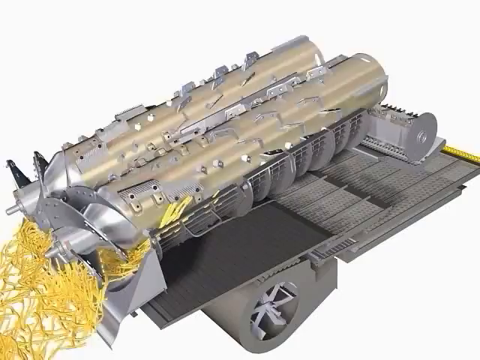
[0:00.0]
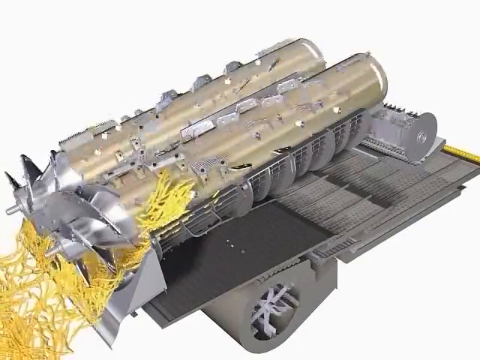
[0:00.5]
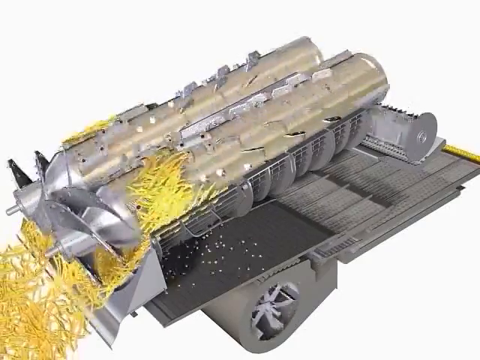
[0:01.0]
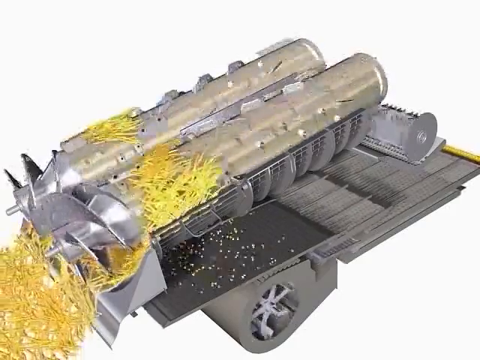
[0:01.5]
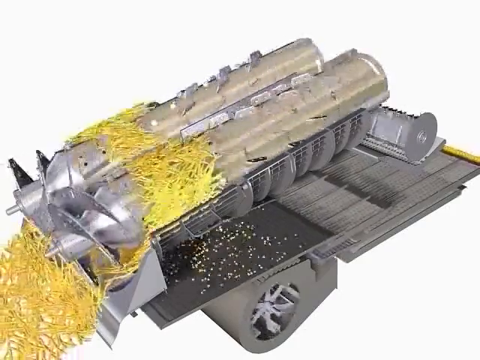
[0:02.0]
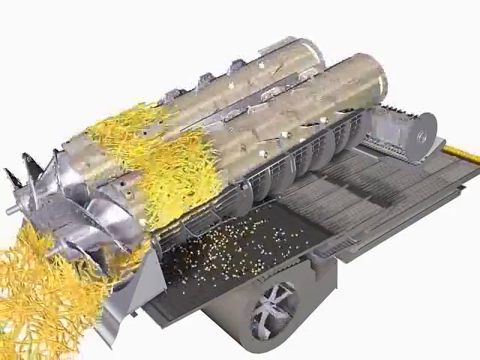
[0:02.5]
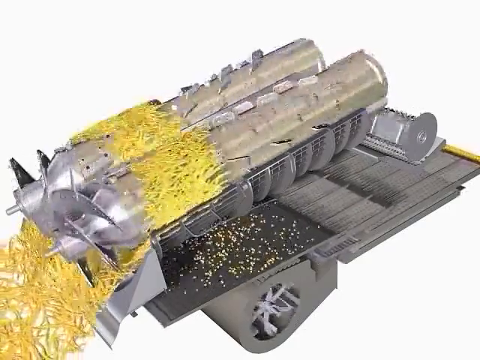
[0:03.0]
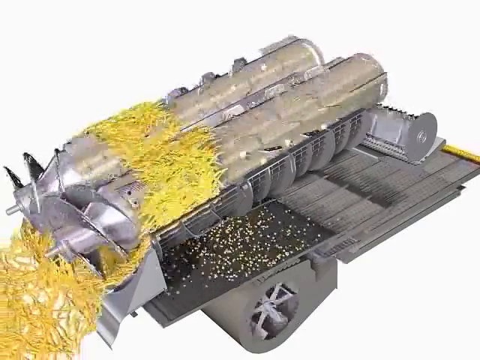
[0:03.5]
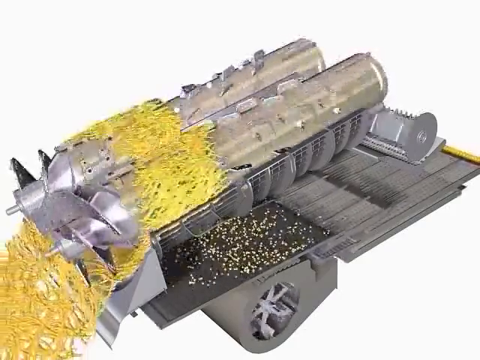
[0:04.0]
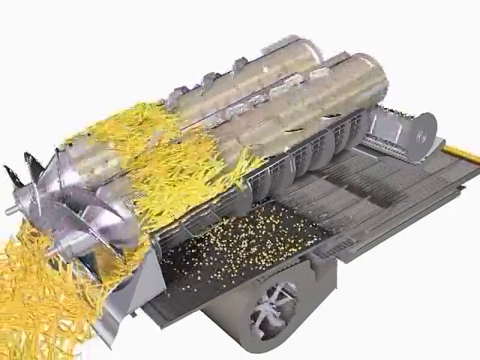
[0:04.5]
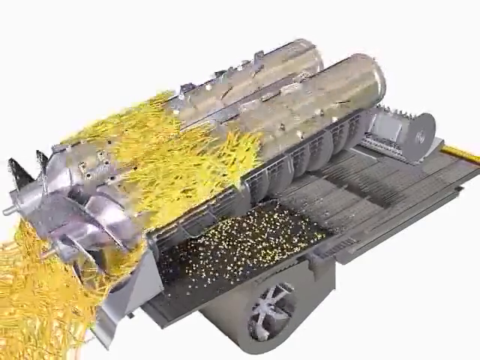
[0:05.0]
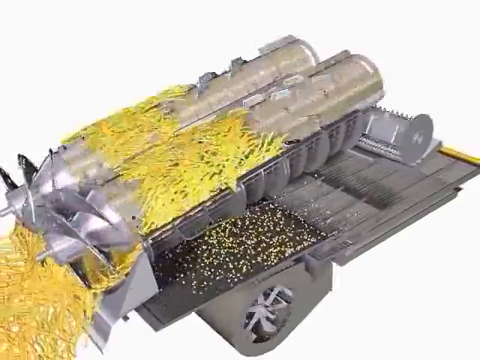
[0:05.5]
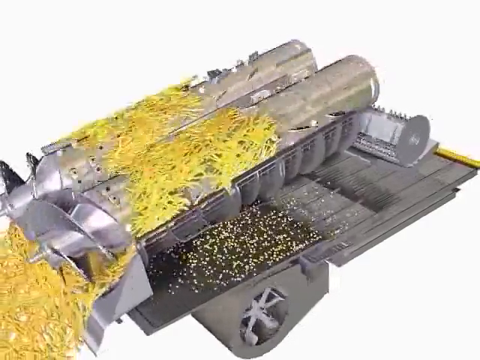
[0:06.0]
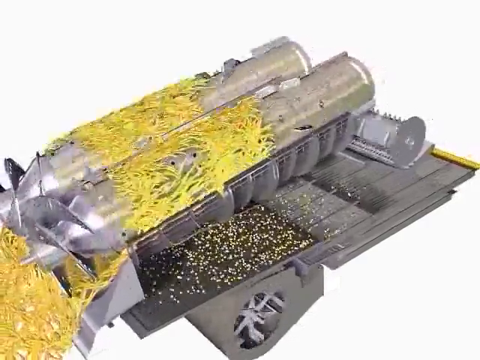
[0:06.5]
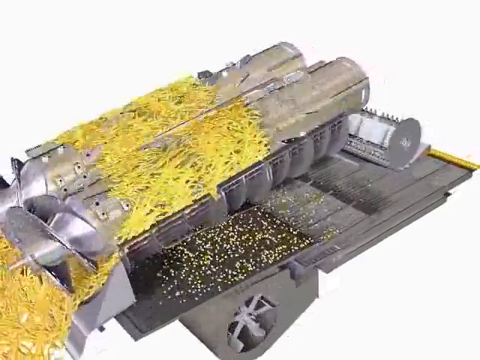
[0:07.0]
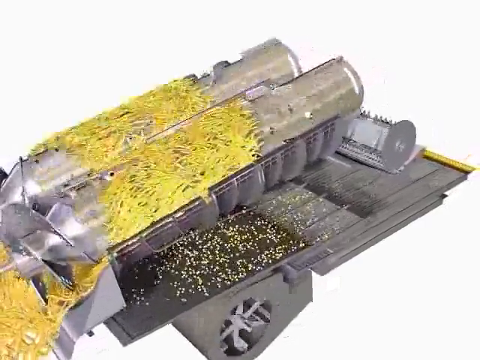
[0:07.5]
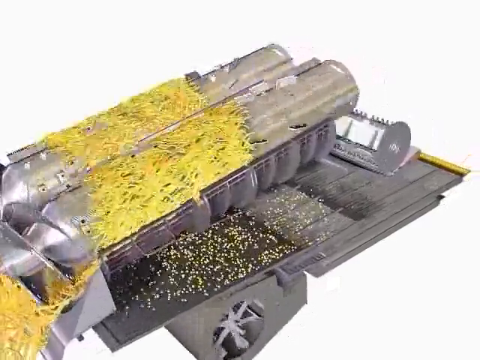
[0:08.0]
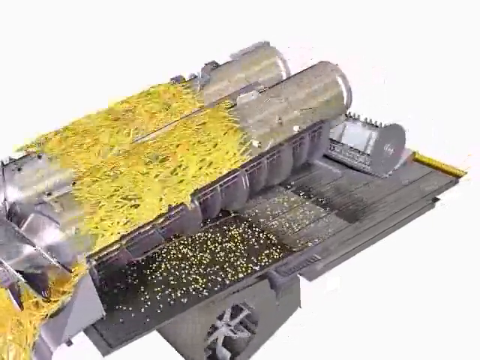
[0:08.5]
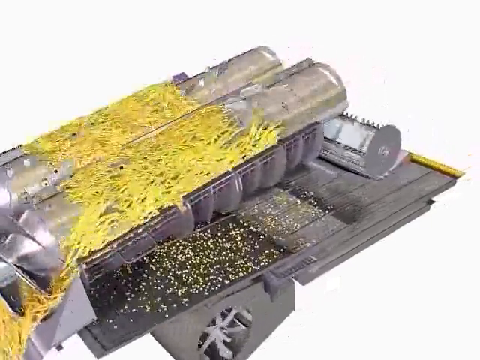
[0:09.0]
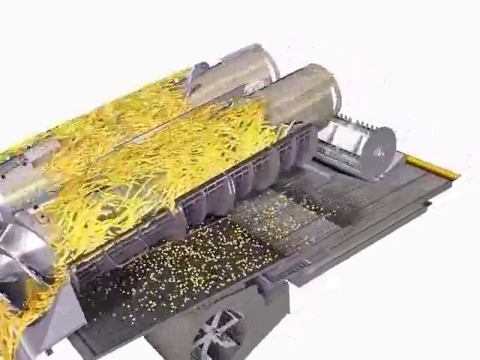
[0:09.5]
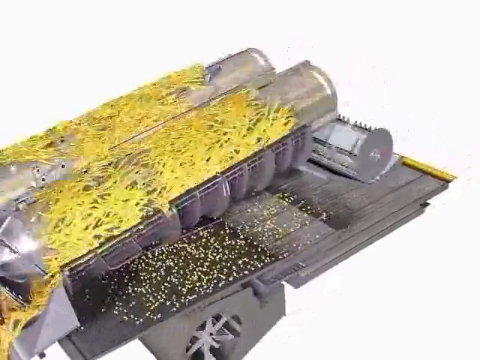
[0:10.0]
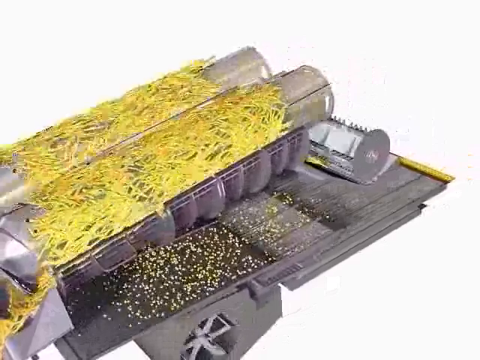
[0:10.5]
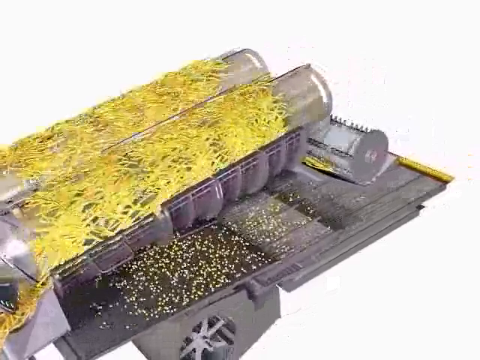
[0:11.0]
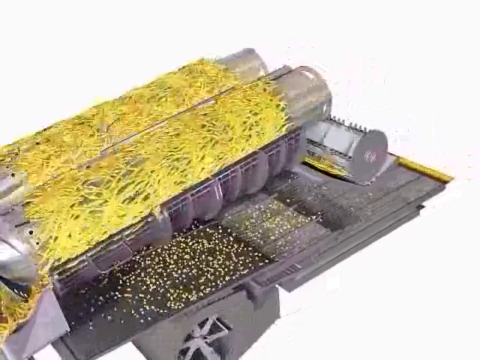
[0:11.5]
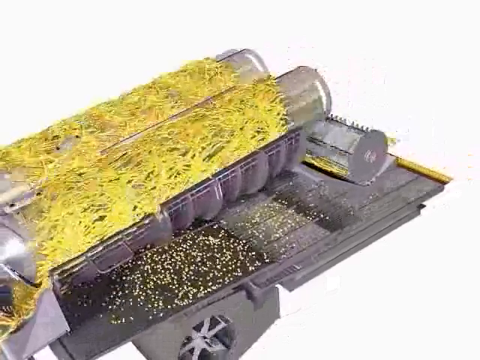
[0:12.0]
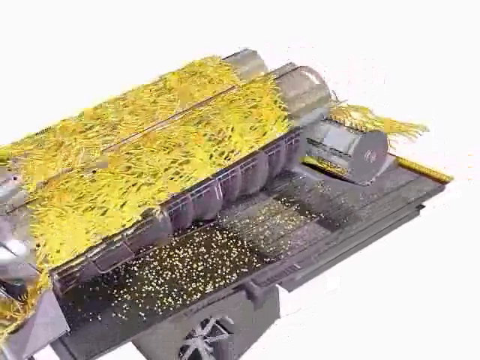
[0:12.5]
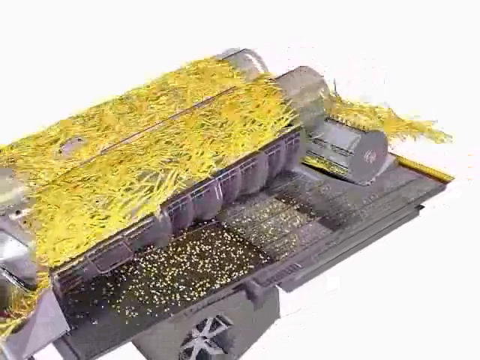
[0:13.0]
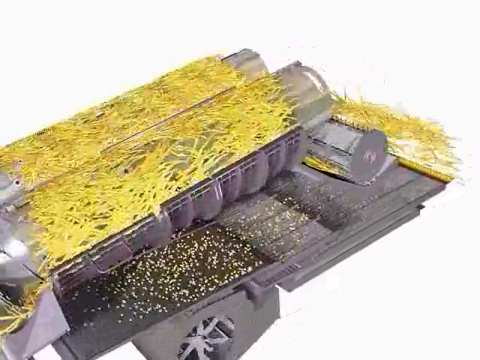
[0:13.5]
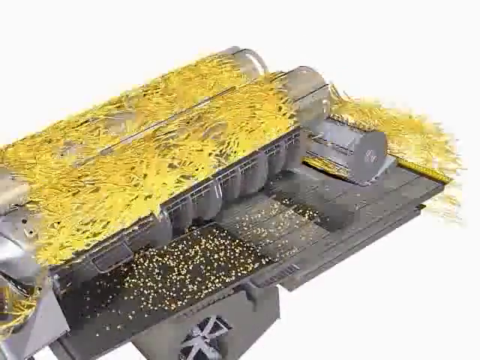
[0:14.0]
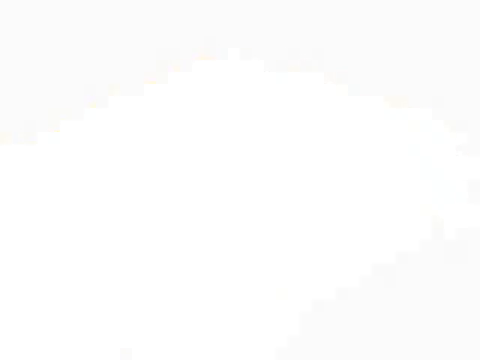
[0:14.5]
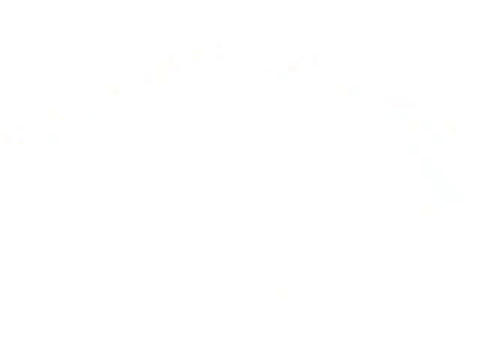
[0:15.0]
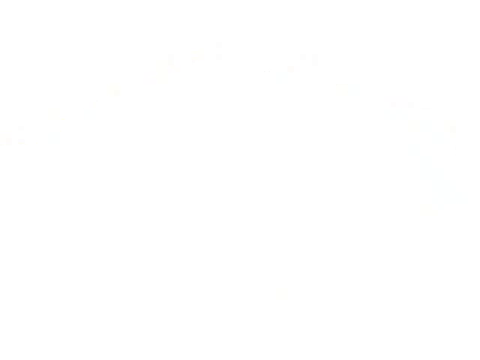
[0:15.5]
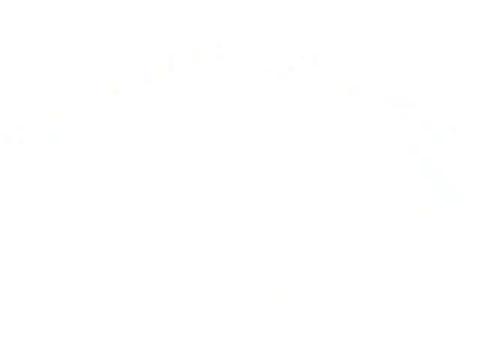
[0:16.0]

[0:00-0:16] The video shows some kind of device, apparently a New Holland CR twin rotor combine. It turns and spins, crushing what looks to be grass or pasta, though it is hard to tell what the material is; the combine chops it up into smaller pieces, and it is possibly some kind of grain. The machine is metal, and at the front there appears to be some kind of hopper. At the bottom, the cut-up material falls in tiny pieces to the bottom below.